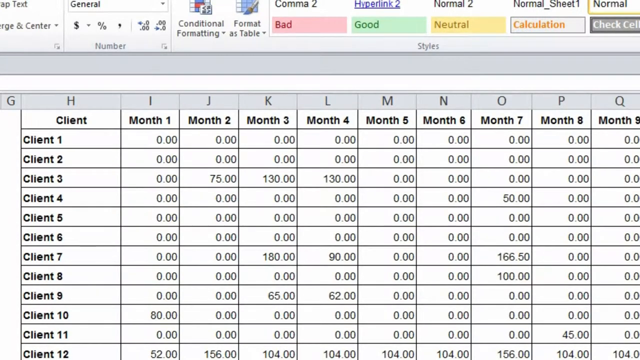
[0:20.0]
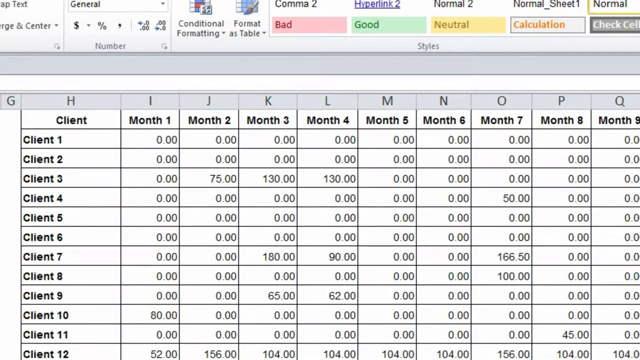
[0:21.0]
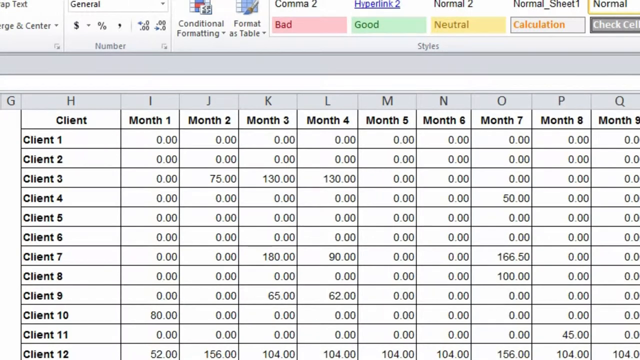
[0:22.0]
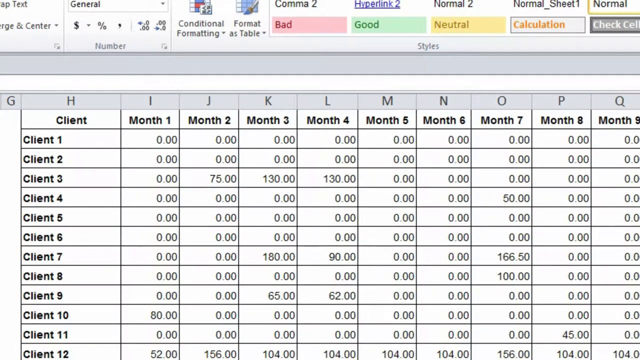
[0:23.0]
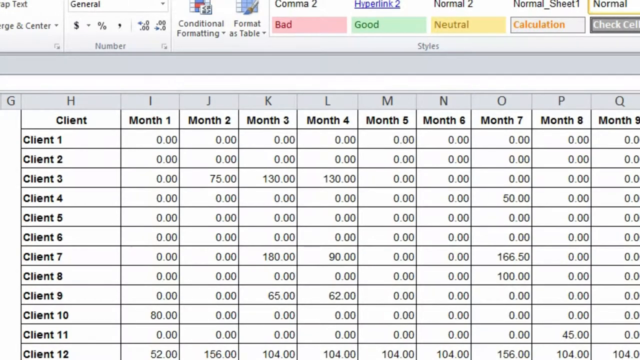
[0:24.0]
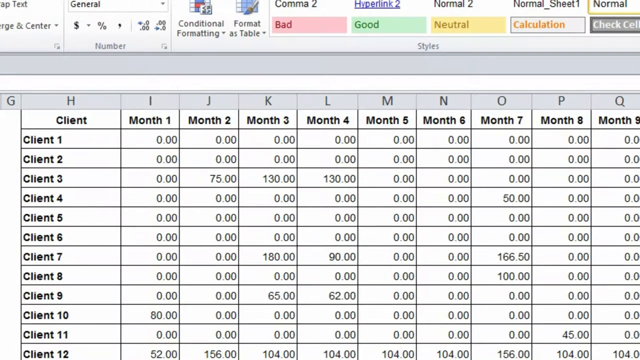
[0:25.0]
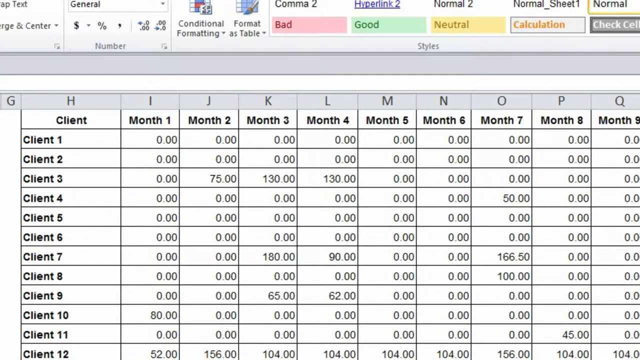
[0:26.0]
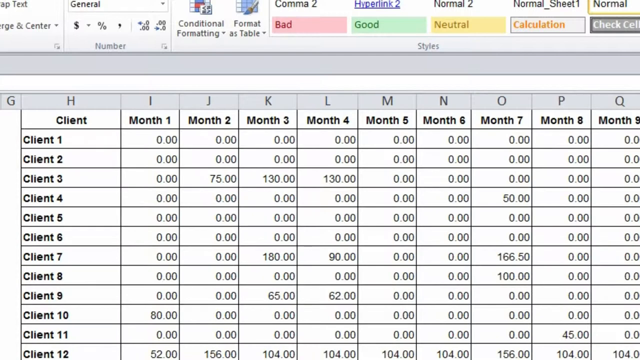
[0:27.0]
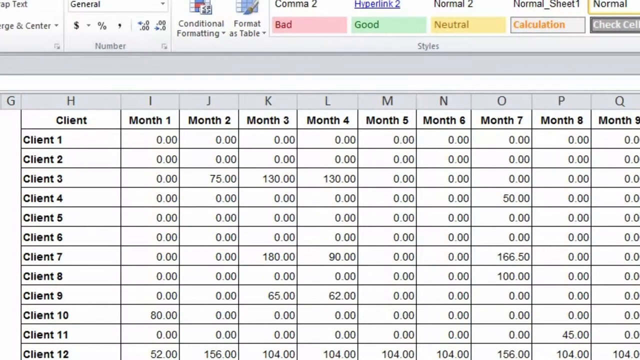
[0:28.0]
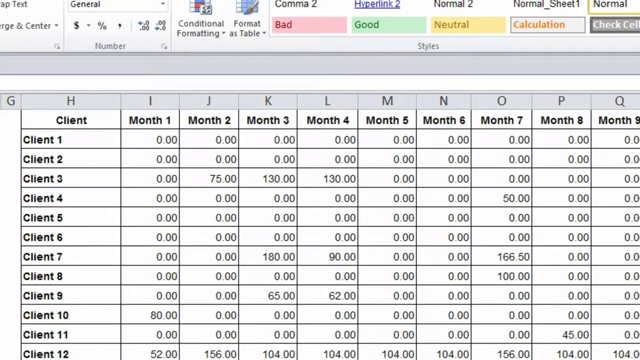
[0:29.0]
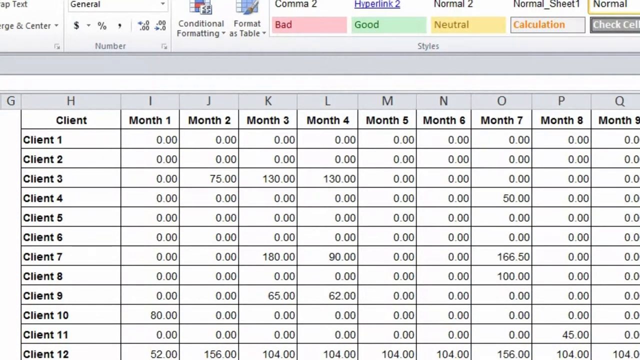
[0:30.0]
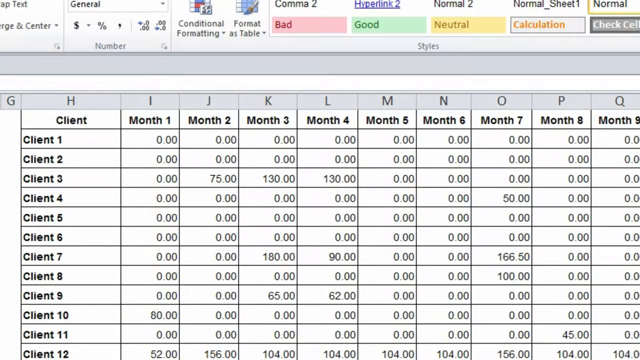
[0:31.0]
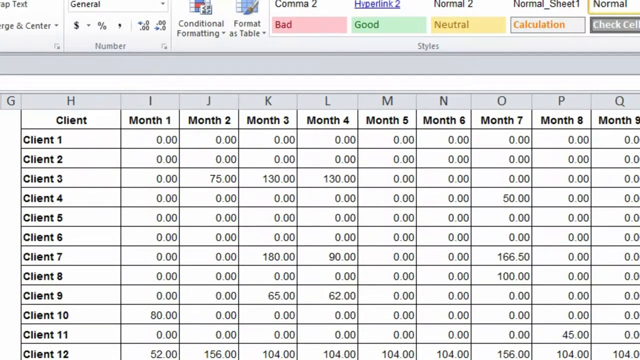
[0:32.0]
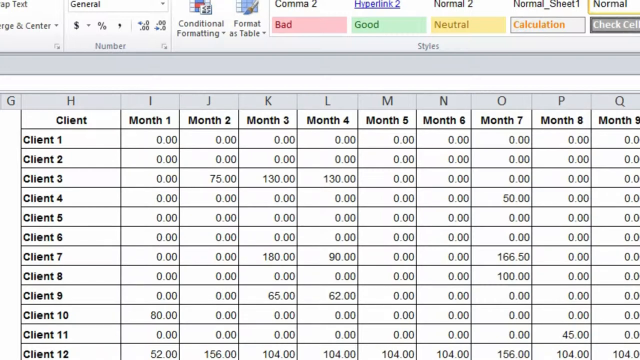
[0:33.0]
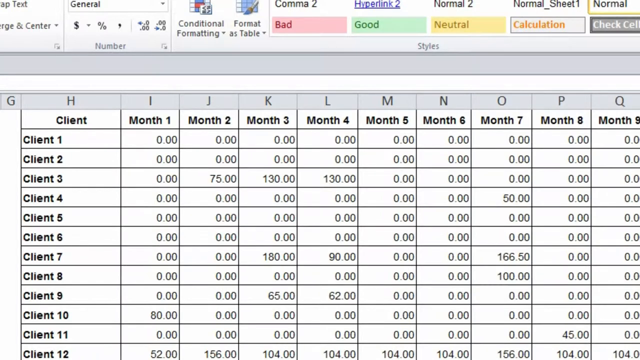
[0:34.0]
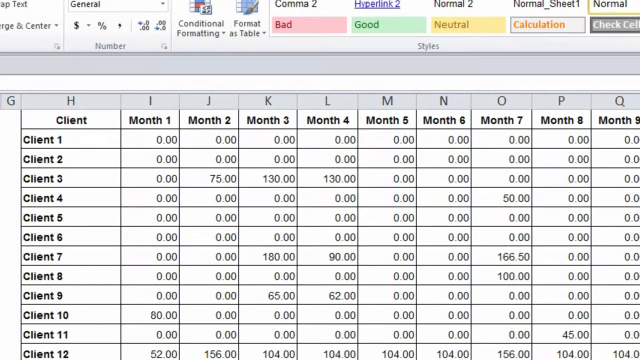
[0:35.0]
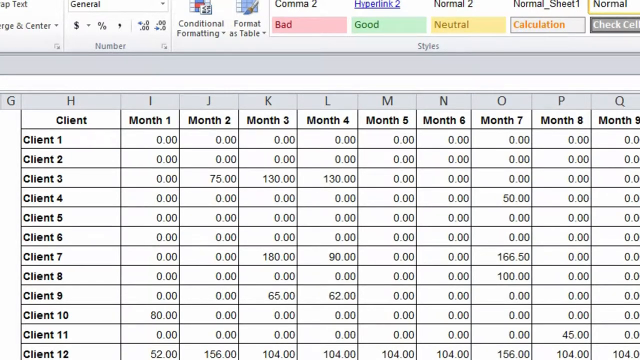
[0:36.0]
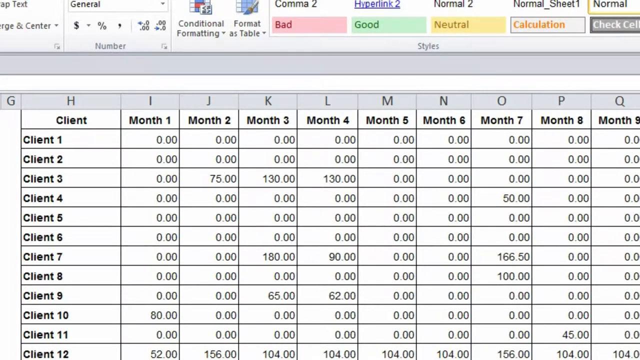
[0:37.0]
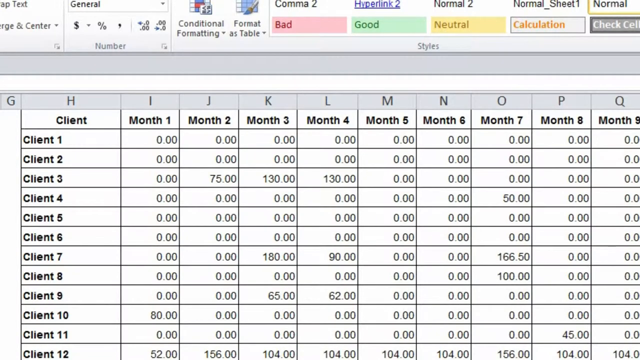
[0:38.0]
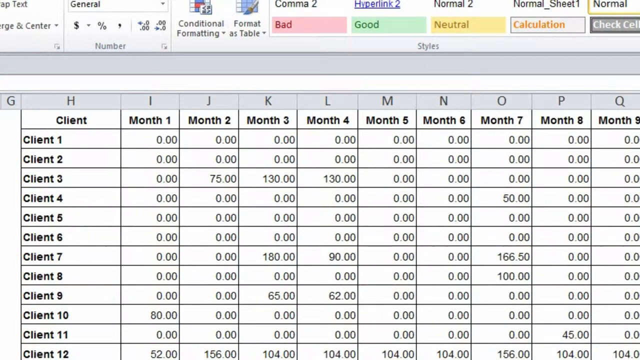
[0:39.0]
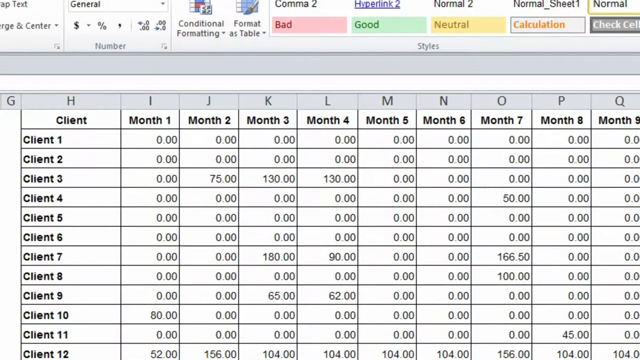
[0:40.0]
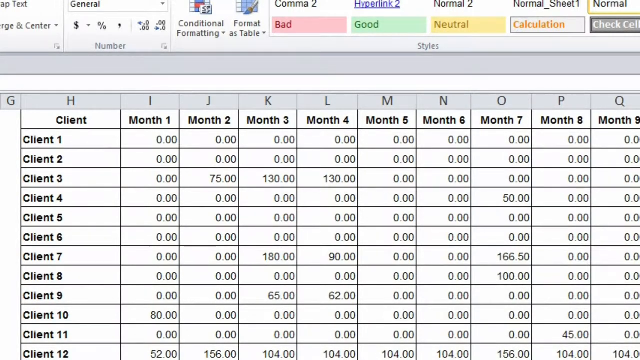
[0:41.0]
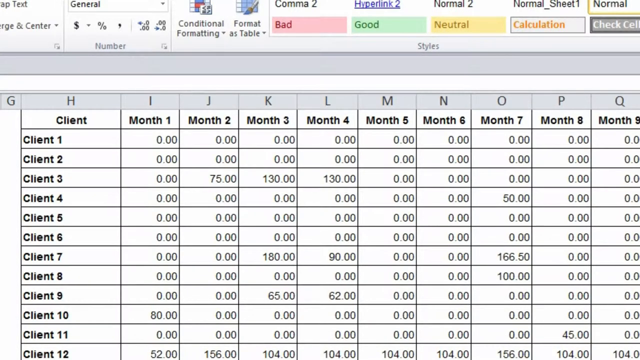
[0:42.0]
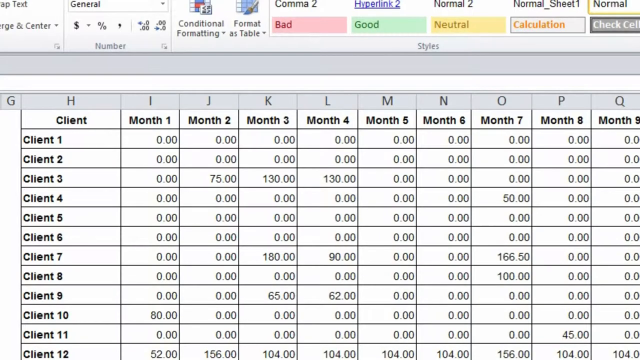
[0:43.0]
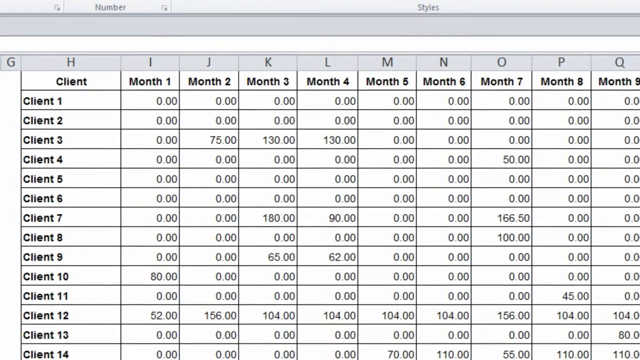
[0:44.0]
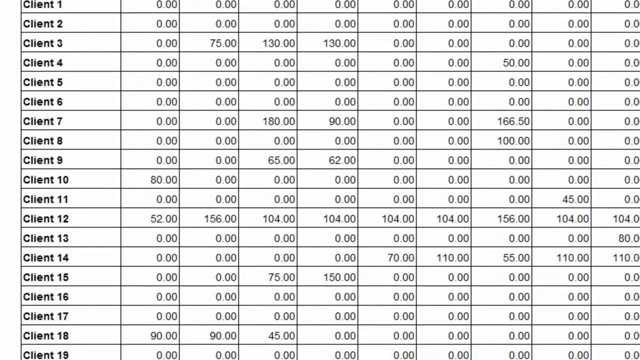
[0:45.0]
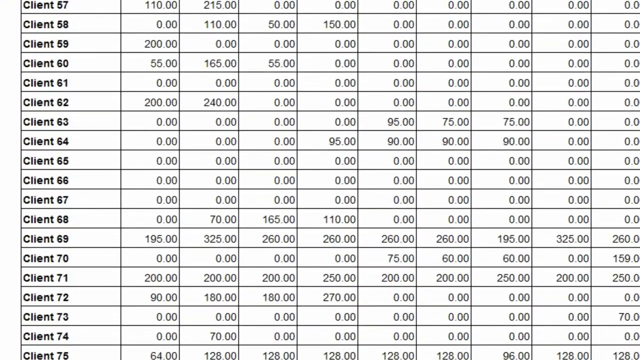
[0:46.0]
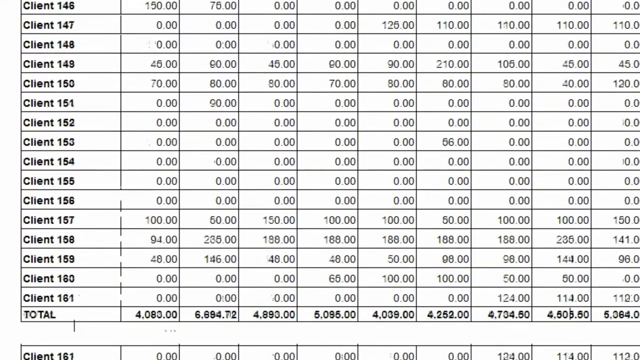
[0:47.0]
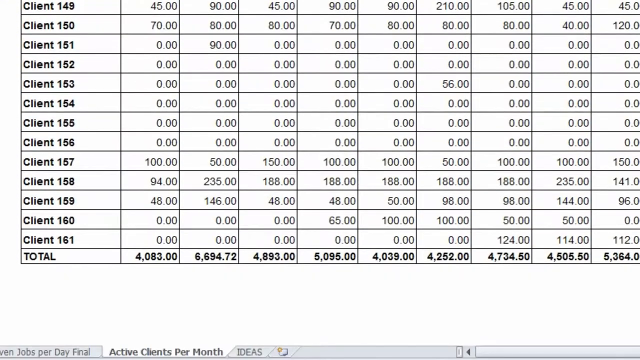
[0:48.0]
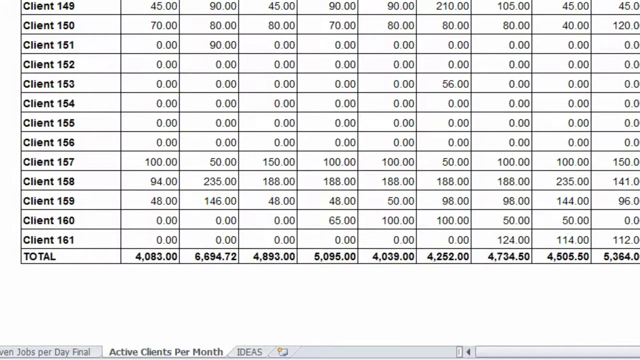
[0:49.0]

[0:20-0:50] The Word spreadsheet for a cleaning business, titled "active clients by month," lists 161 clients across twelve months. Clients are named only client one, client two, and so on, with no last names. Only a few clients were billed for cleaning every single month; most months for most clients have not been billed. The labels "bad," "good" and "neutral" appear. At some point someone scrolls down to the bottom of the sheet.